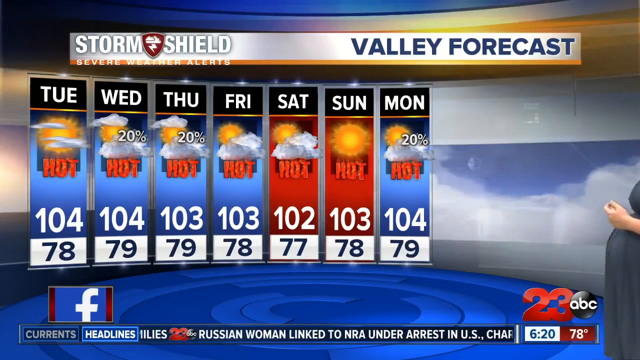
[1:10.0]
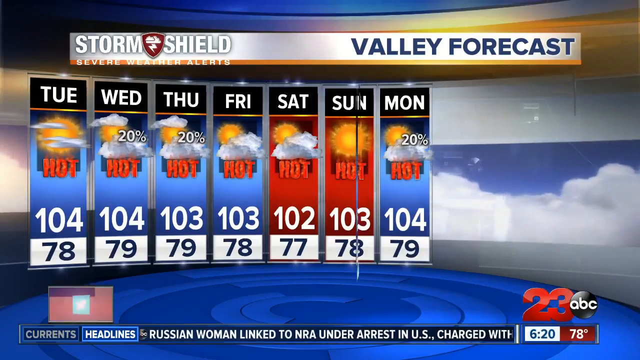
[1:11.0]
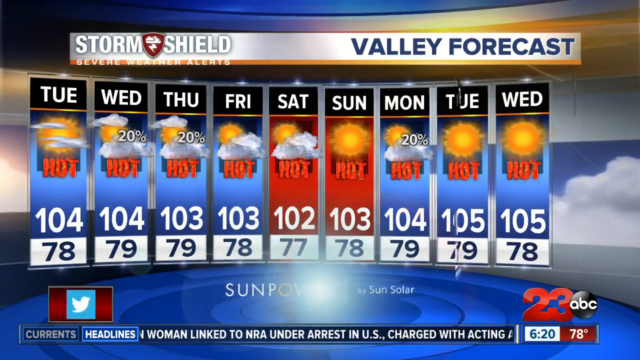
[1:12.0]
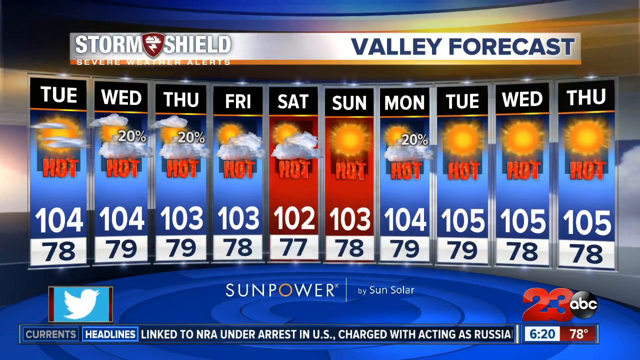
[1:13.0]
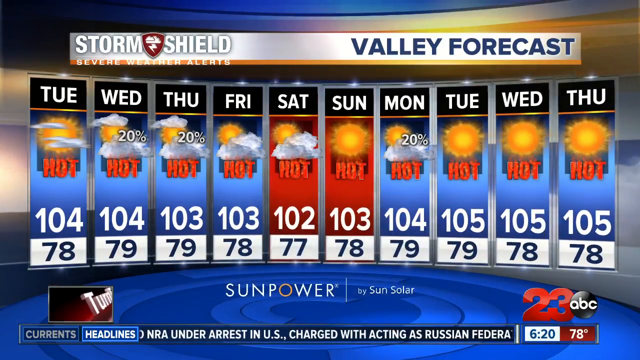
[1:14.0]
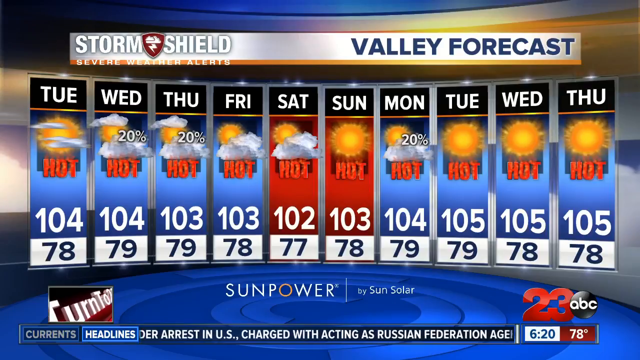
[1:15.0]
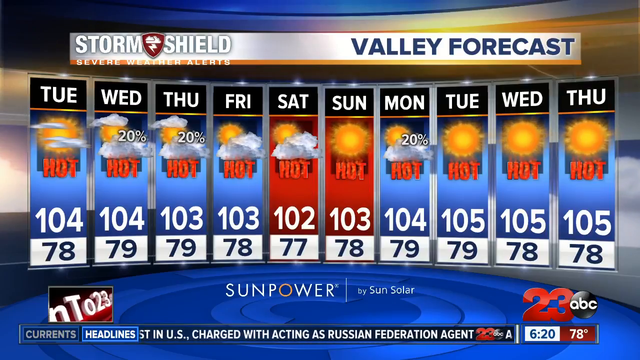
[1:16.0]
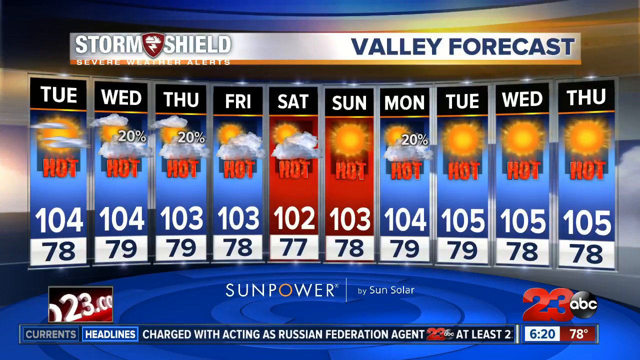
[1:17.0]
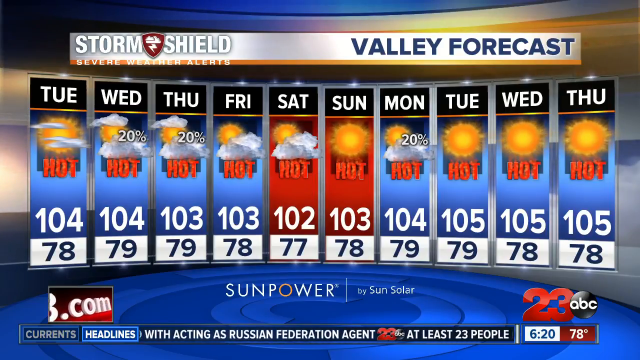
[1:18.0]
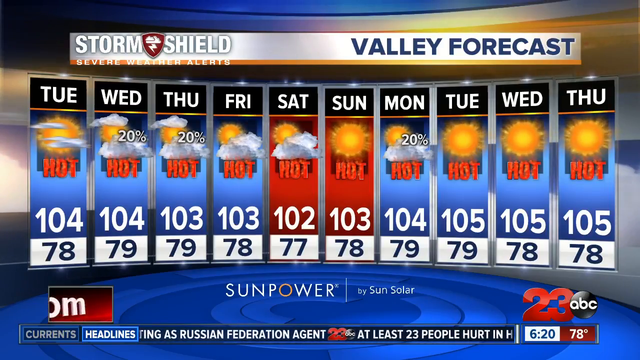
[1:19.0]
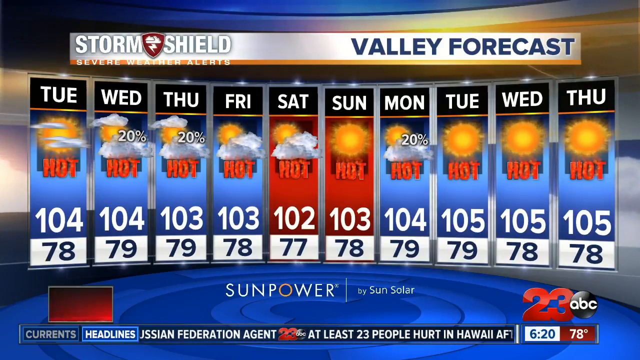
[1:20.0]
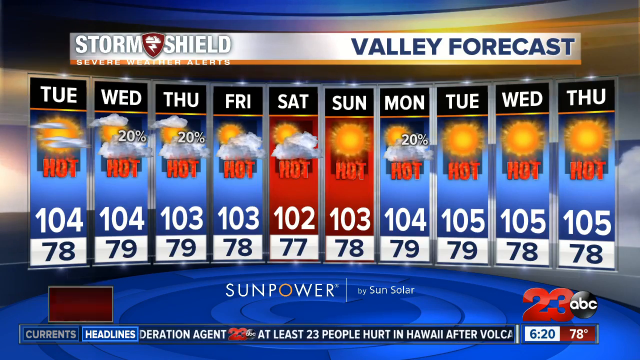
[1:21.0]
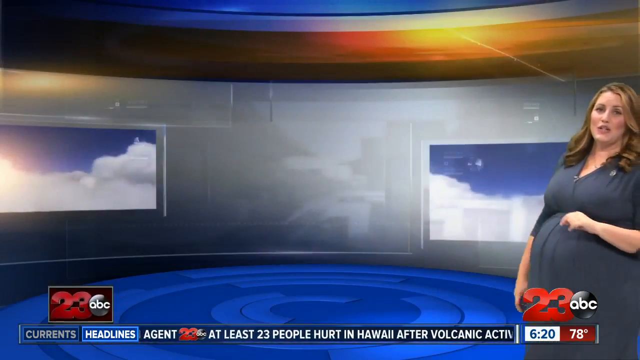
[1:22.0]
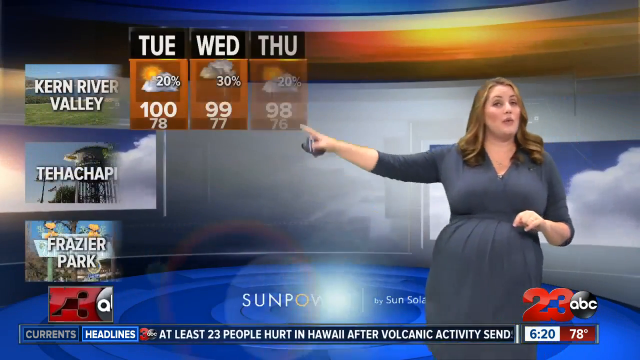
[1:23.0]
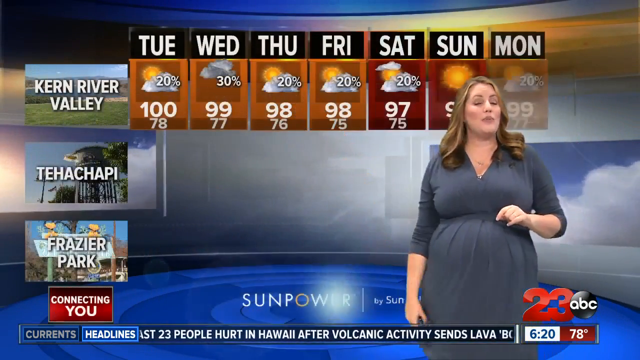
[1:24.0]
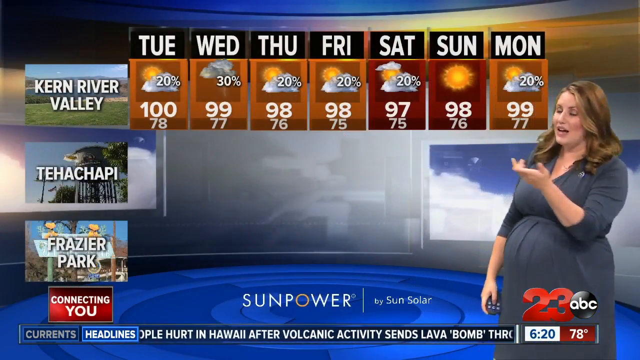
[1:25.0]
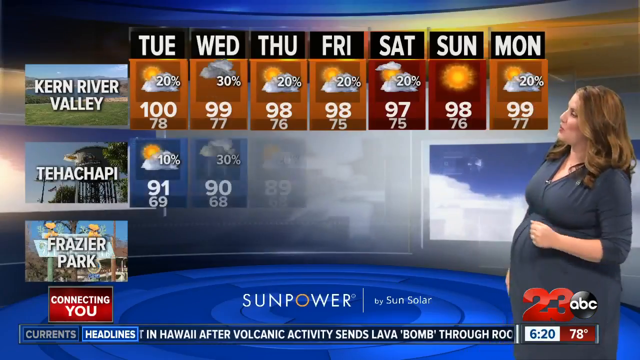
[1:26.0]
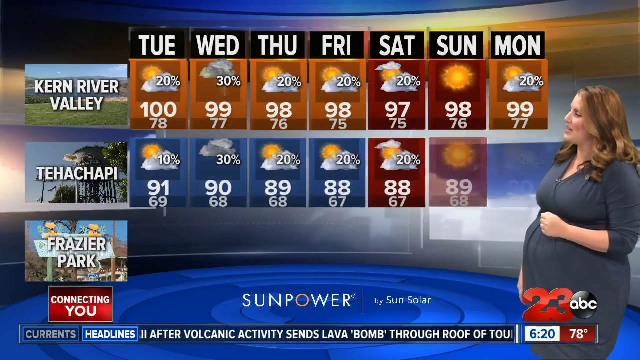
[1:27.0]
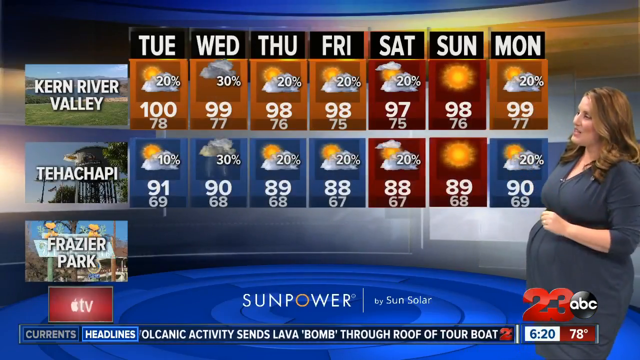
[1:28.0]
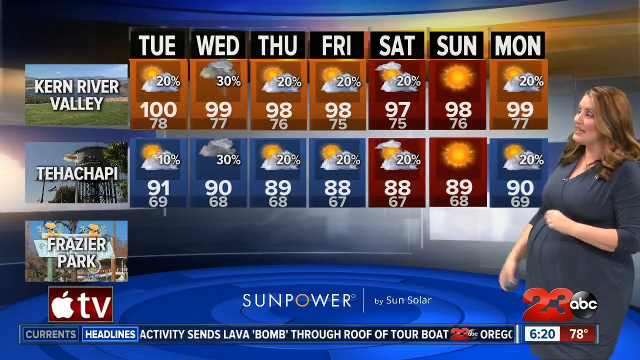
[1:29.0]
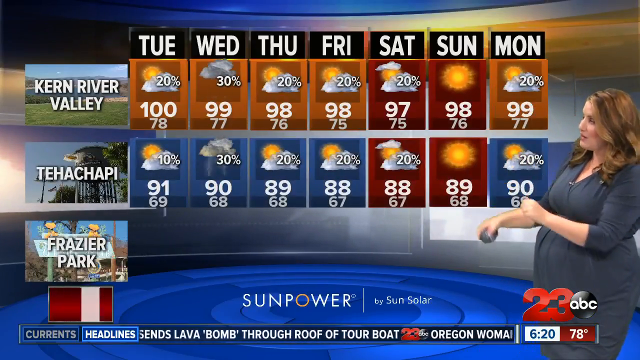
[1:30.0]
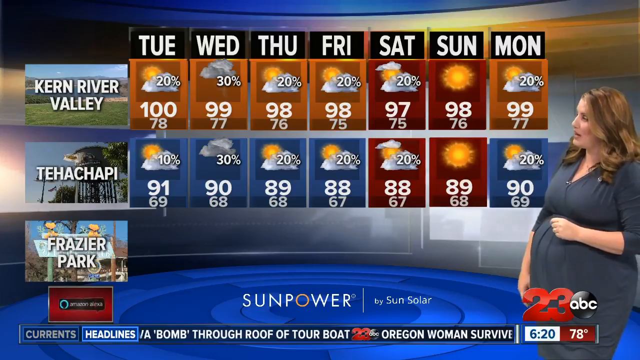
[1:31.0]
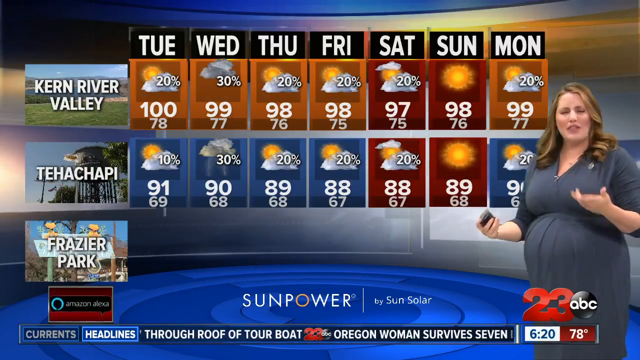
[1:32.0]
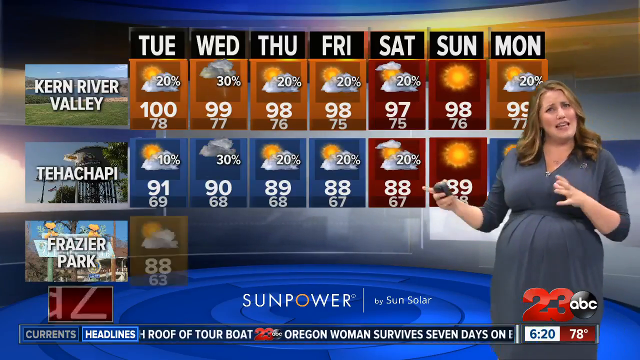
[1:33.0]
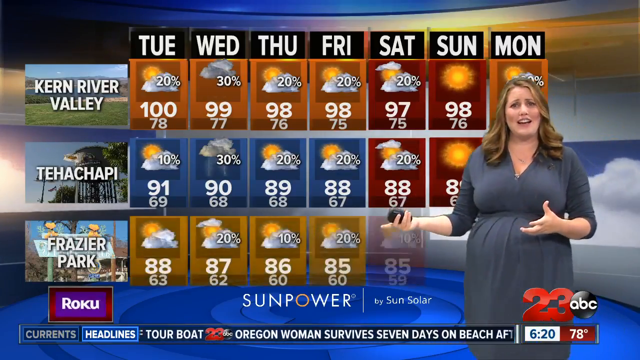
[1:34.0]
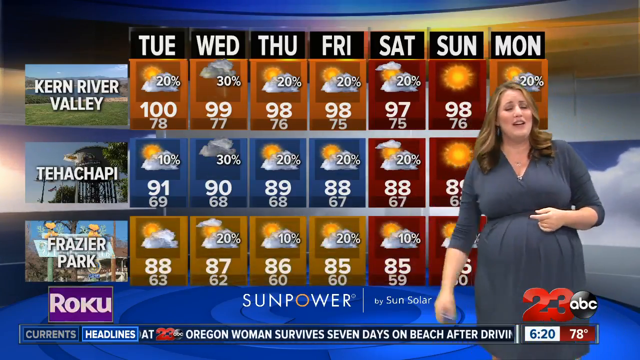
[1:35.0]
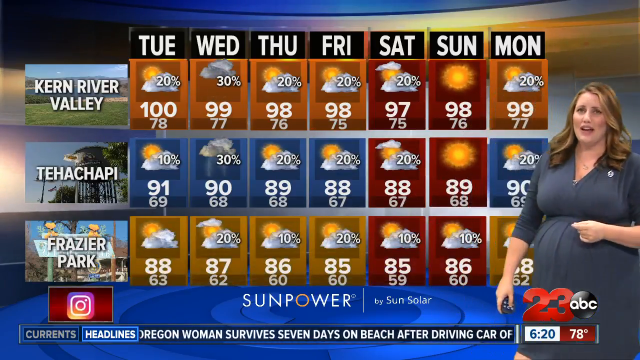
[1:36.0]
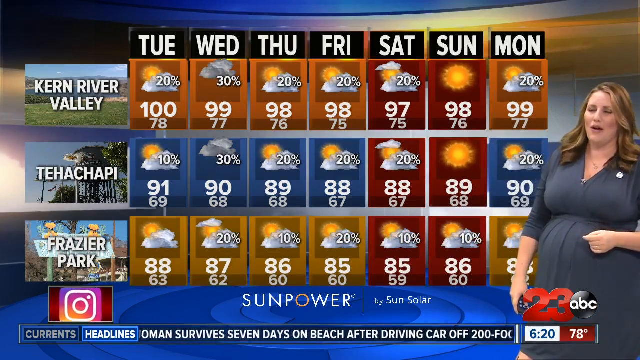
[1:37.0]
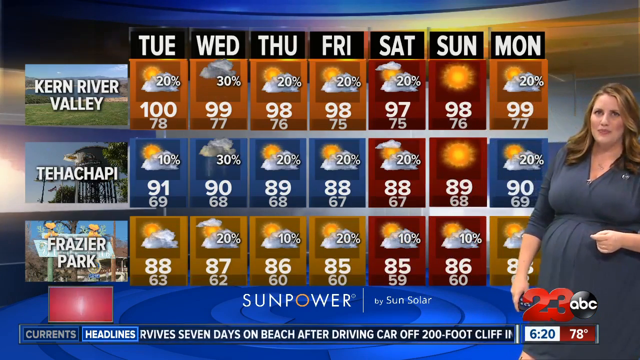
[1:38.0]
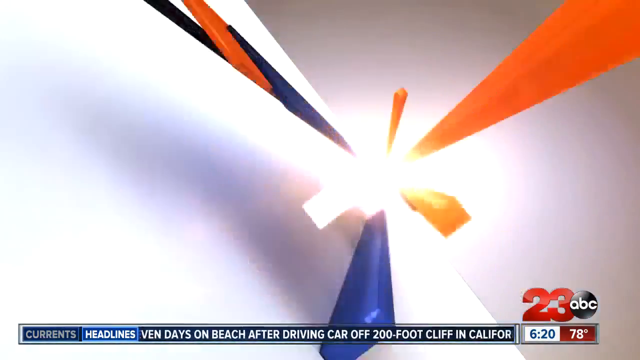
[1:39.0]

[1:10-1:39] A "Storm Shield Valley forecast" lists Tuesday, Wednesday, Thursday, Friday, Saturday, Sunday, Monday, Tuesday, Wednesday and Thursday, covering more than a week and a half, with every day quite hot on average. Text reads "Sun Power by Sun Solar" alongside 23 ABC News weather. A current headline reads "At least 23 people hurt in Hawaii after volcanic activity sends lava bomb through roof of tour boat". A projection appears over Kern River Valley and Fraser Park, showing temperatures and the forecast of the storm and precipitation. A "Storm Shield Doppler" radar and satellite view shows the storm's intensity and projection. The woman wears a blue dress and appears somewhat heavy.